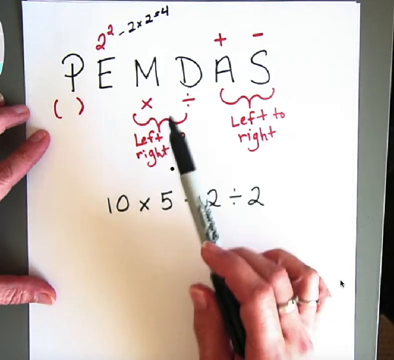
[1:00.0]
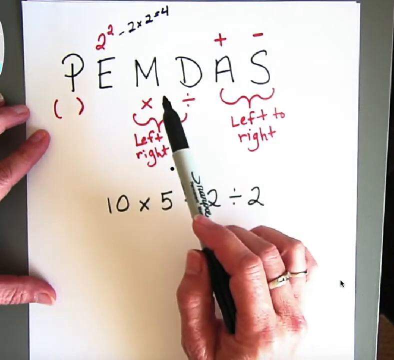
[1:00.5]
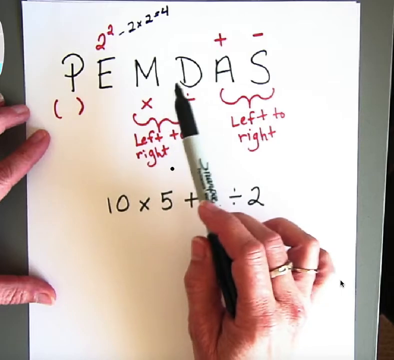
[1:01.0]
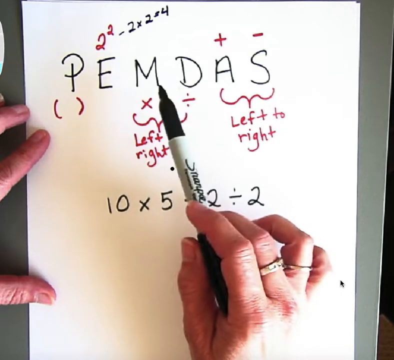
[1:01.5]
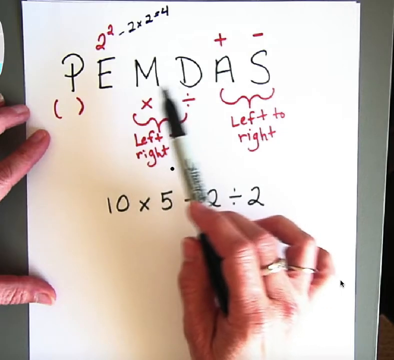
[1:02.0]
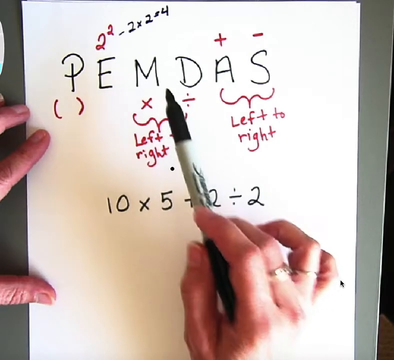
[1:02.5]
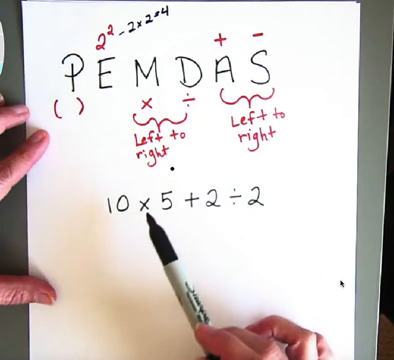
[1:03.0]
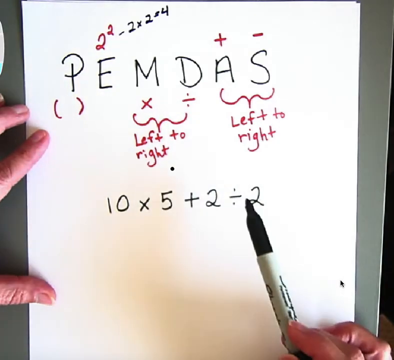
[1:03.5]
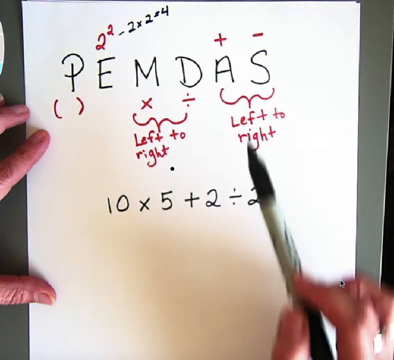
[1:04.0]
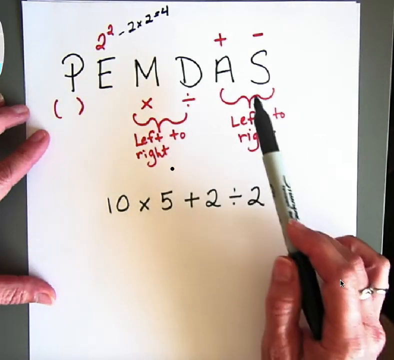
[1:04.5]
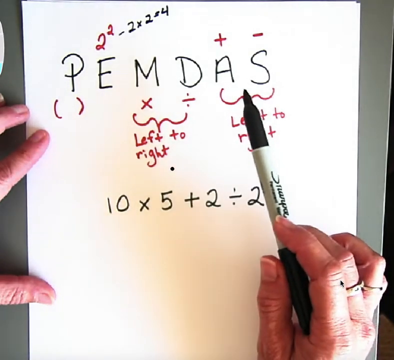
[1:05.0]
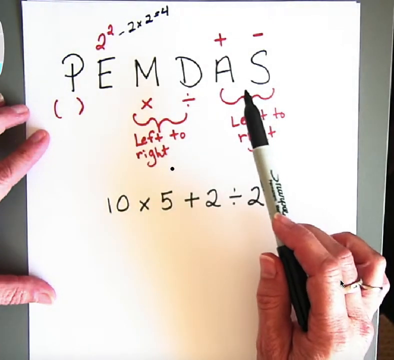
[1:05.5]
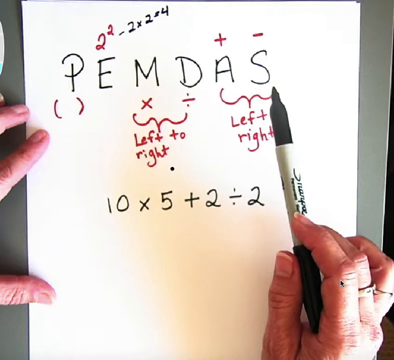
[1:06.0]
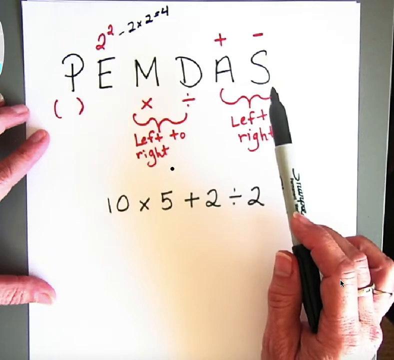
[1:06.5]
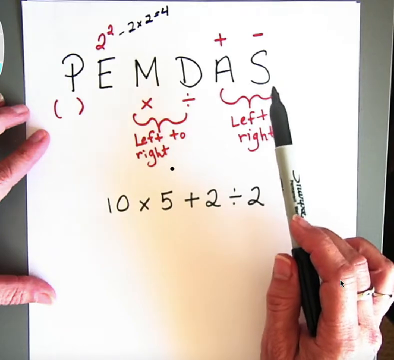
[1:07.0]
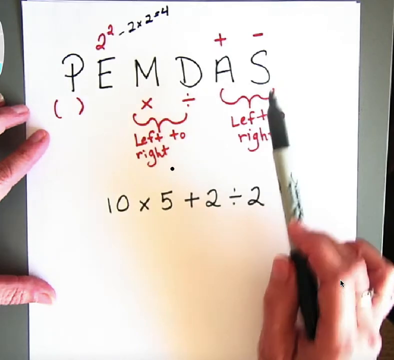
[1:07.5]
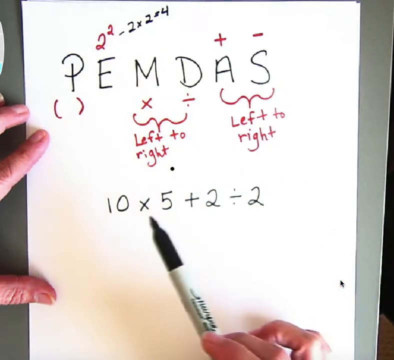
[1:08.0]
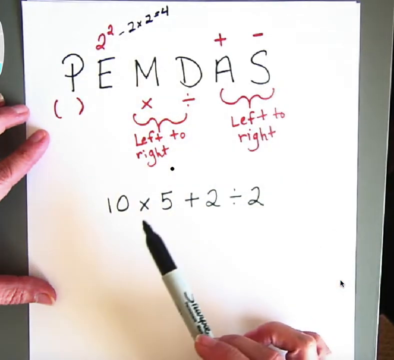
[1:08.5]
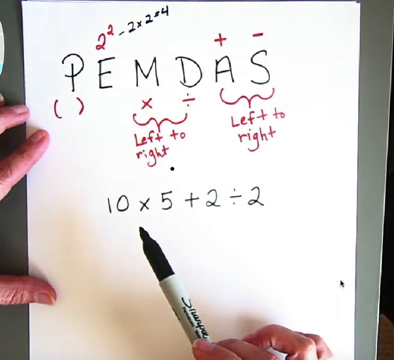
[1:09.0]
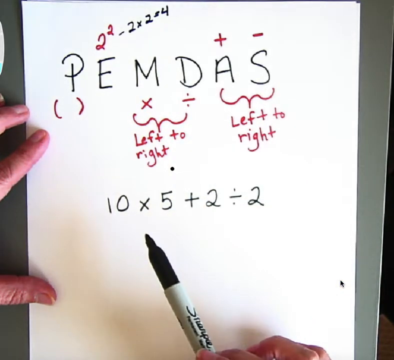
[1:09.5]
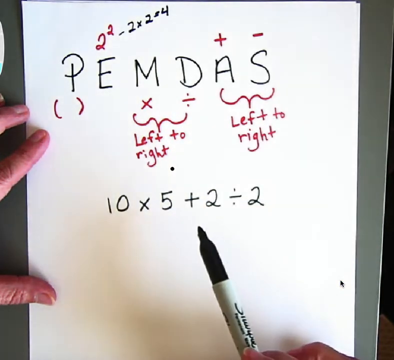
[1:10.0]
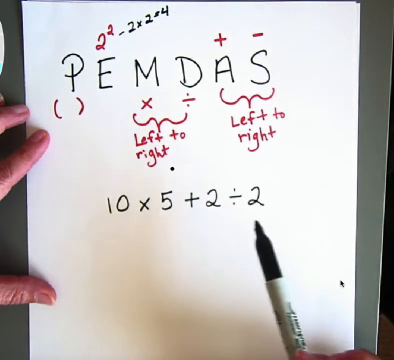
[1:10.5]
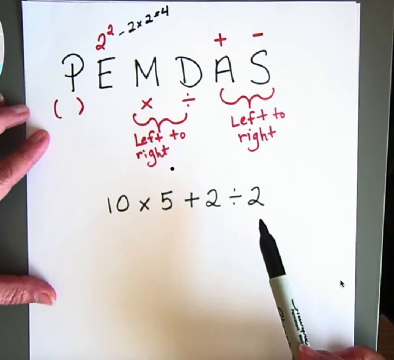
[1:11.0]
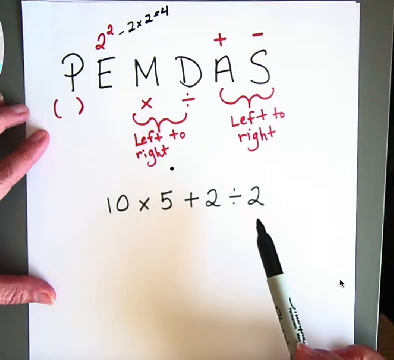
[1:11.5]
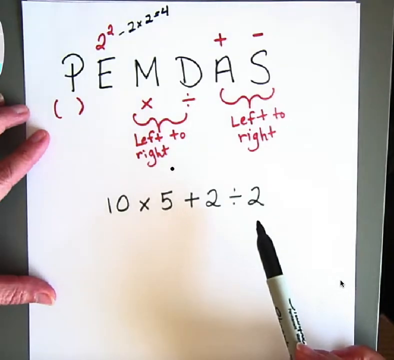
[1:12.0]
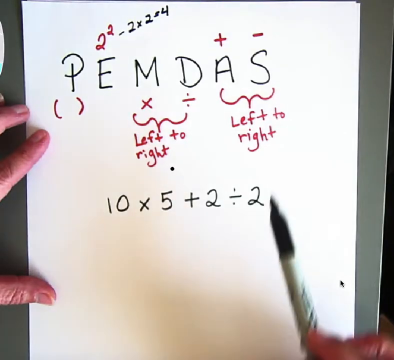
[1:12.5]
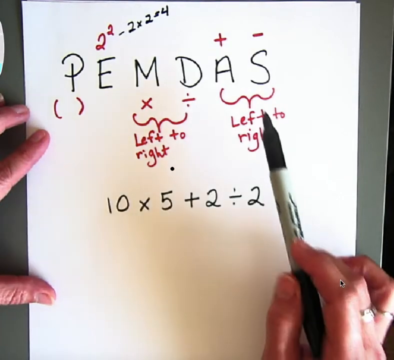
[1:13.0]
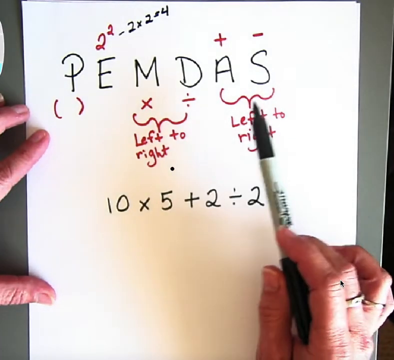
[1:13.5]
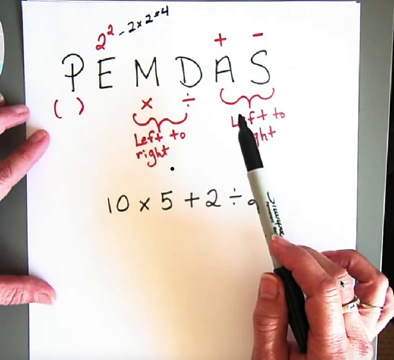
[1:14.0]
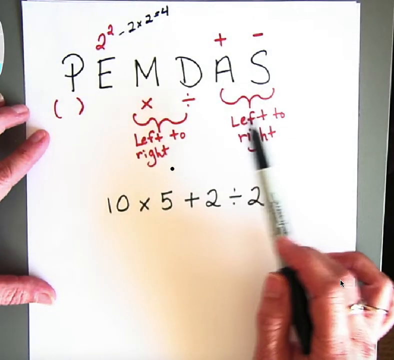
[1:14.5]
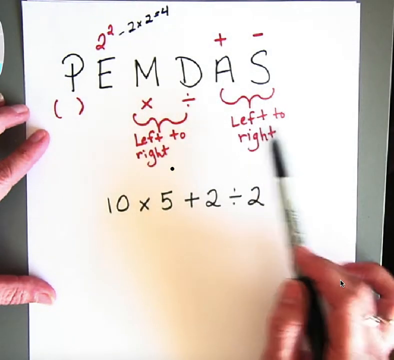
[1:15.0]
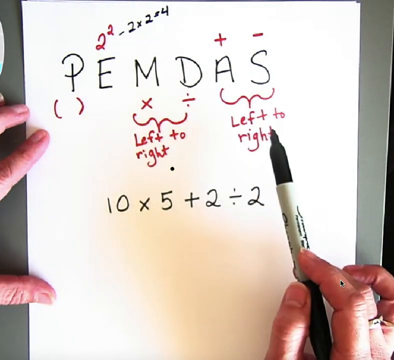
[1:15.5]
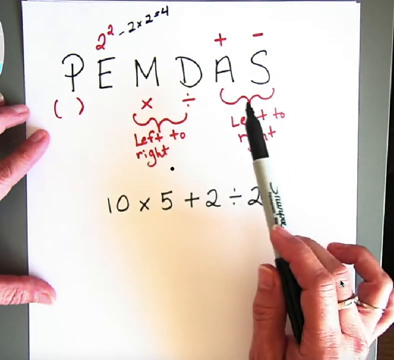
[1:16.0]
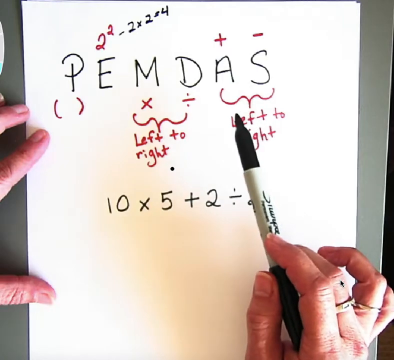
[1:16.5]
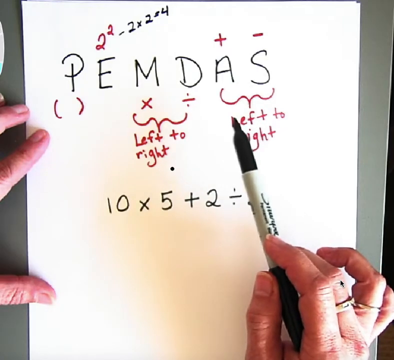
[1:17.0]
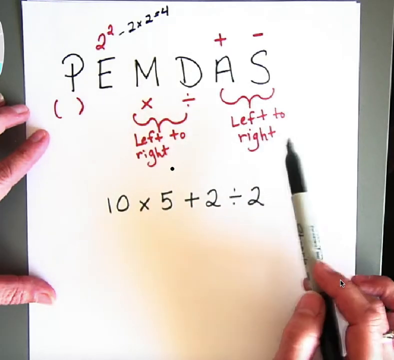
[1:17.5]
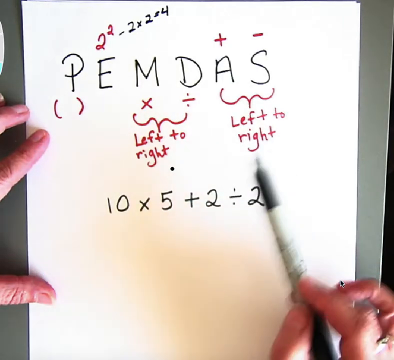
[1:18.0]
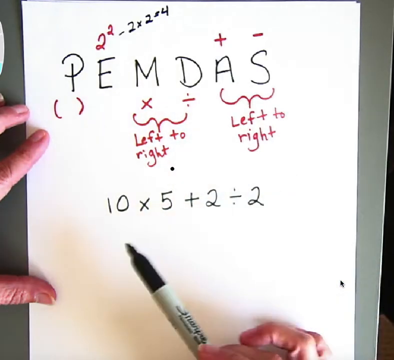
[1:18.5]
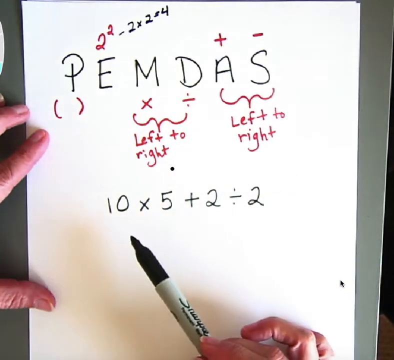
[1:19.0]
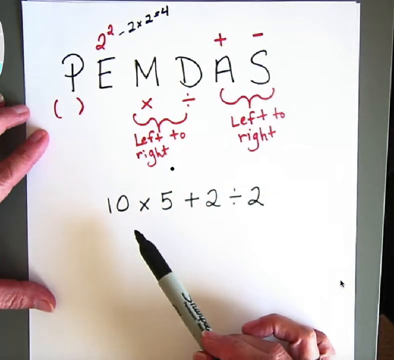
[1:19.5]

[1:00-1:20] "PEMDAS" is written in capital letters across the top of the paper, with spaces between the letters. Over the E is a red 2 to the second power, and beside it in black is minus 2 times 2 equals 4. Under the black capital P is a red parentheses symbol, under the M an X, and under the D a division sign, with a squiggly line pointing to the instructions "left to right". Under the capital A and capital S a wiggly sign points to "left to right". Above the capital A is a red plus sign, and above the capital S is a red plus sign. The person waves the marker between the M and D and points toward the formula at the bottom, 10 times 5 plus 2 divided by 2. They point toward the A and the S, go back to the formula at the bottom, point at "left to right" and wave the marker over it, then come back down to the formula and stop on the wavy symbol under the M and D.